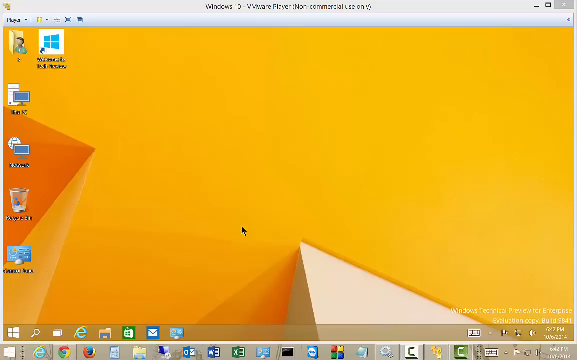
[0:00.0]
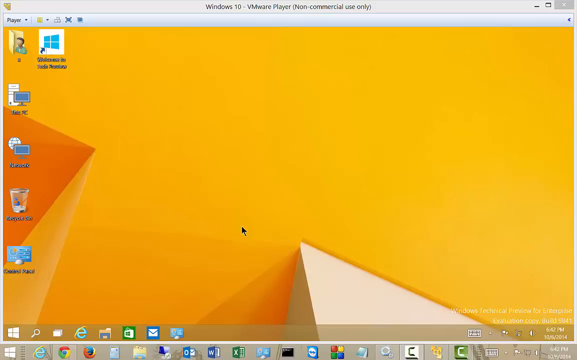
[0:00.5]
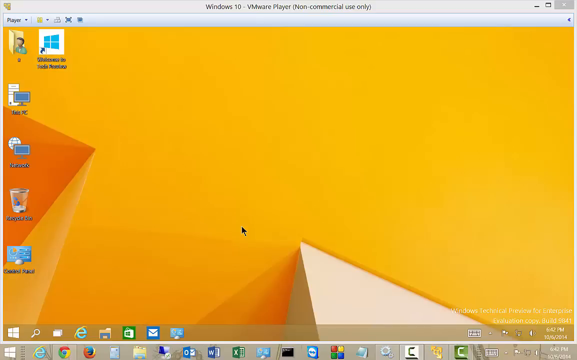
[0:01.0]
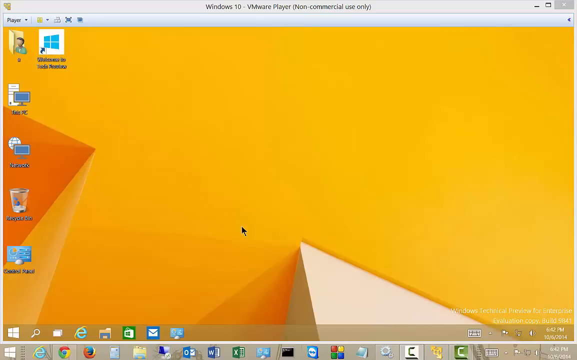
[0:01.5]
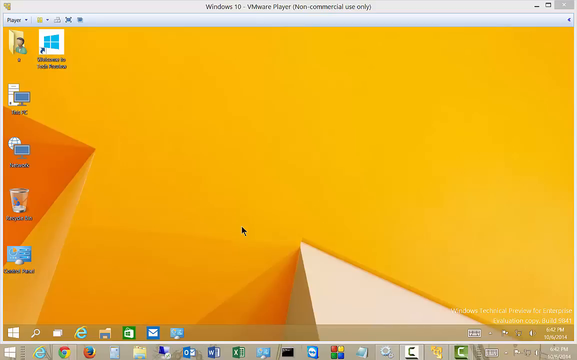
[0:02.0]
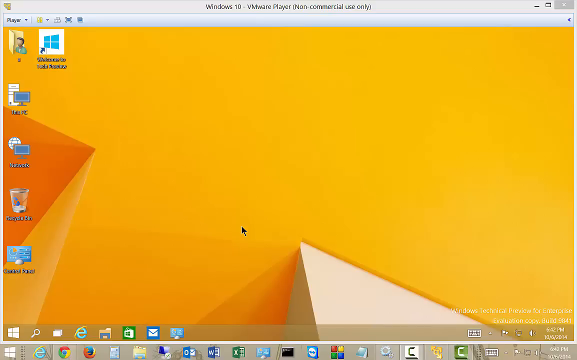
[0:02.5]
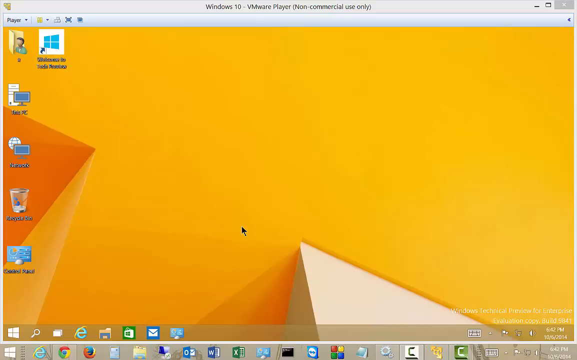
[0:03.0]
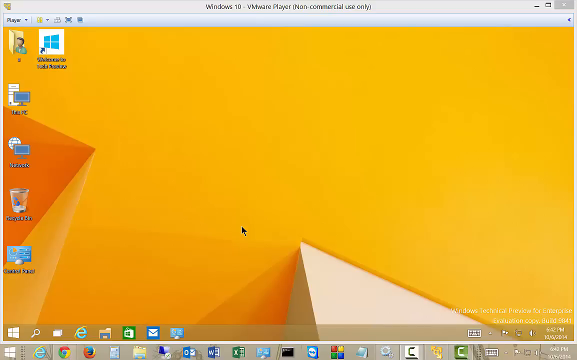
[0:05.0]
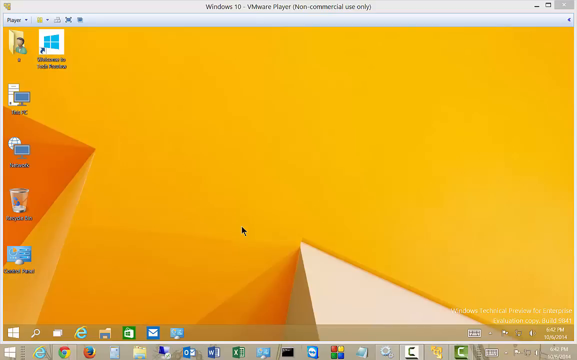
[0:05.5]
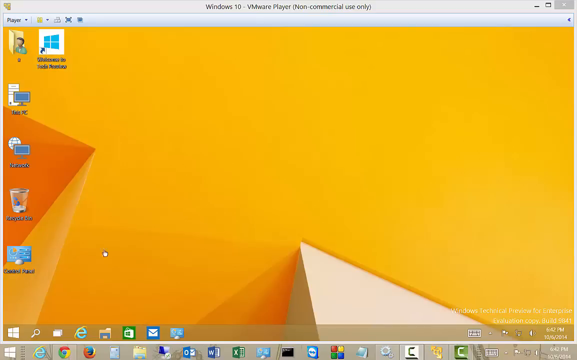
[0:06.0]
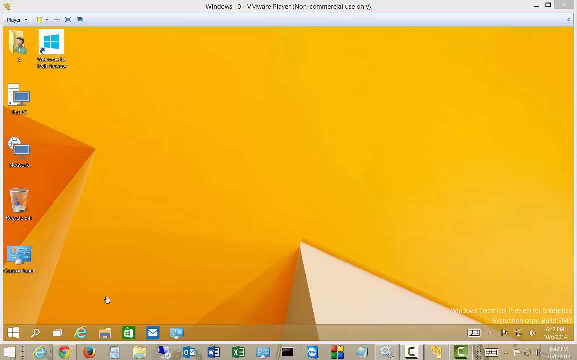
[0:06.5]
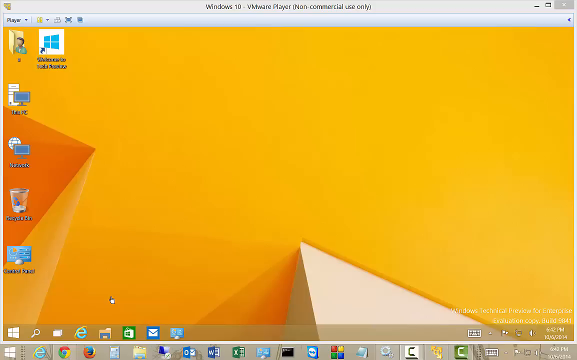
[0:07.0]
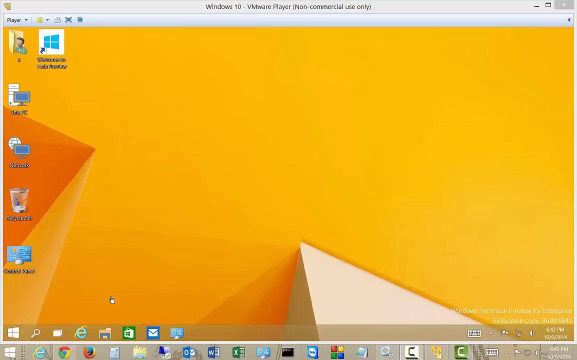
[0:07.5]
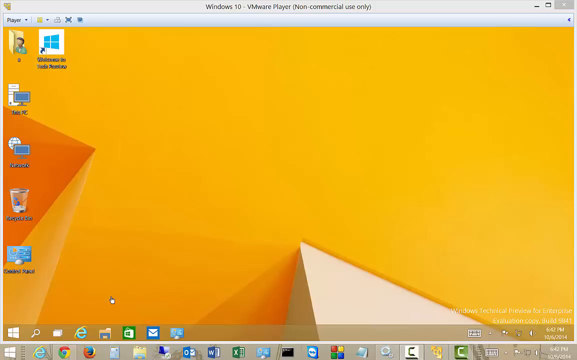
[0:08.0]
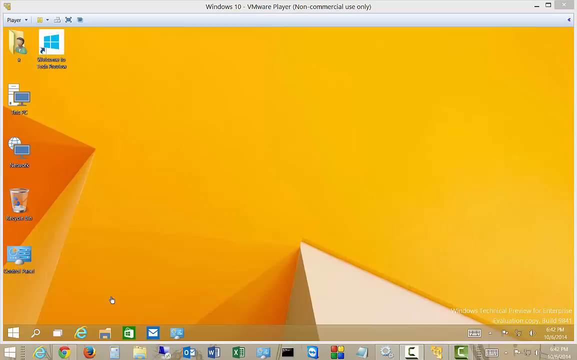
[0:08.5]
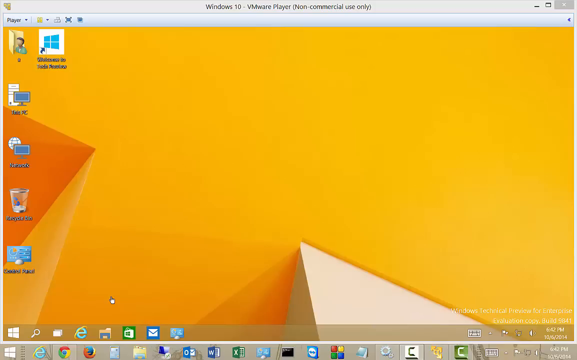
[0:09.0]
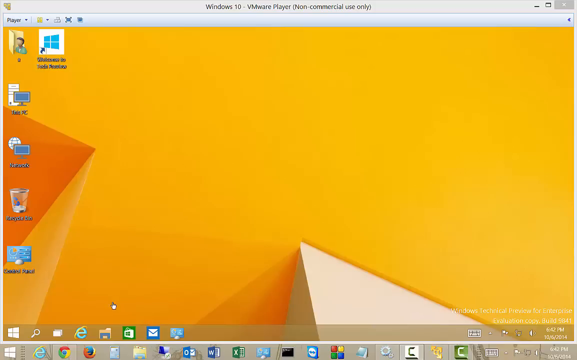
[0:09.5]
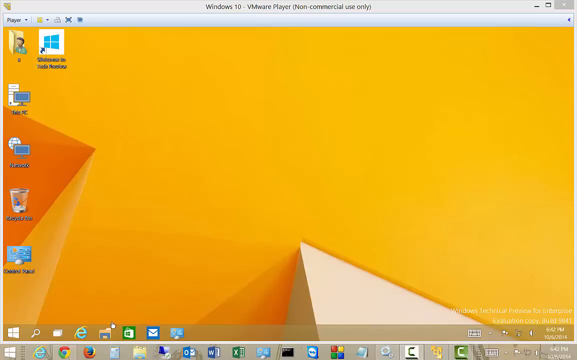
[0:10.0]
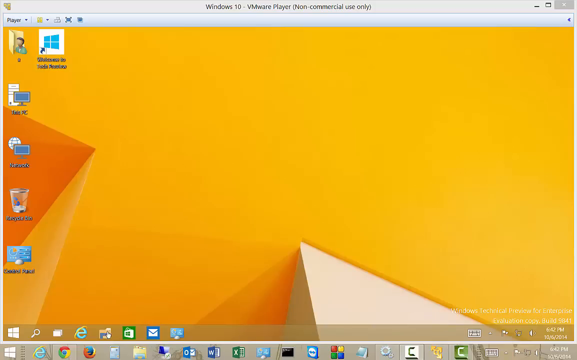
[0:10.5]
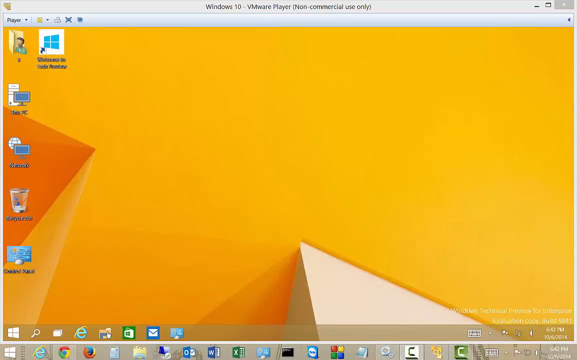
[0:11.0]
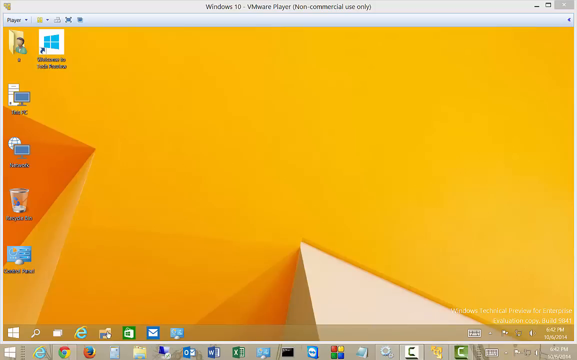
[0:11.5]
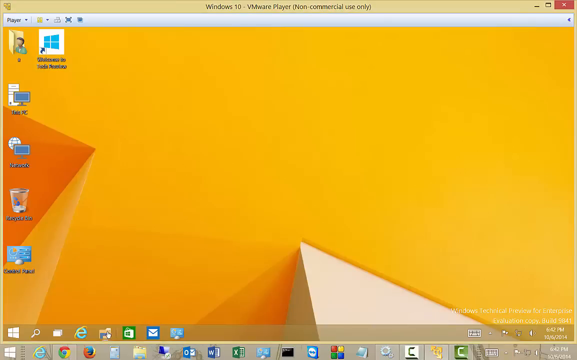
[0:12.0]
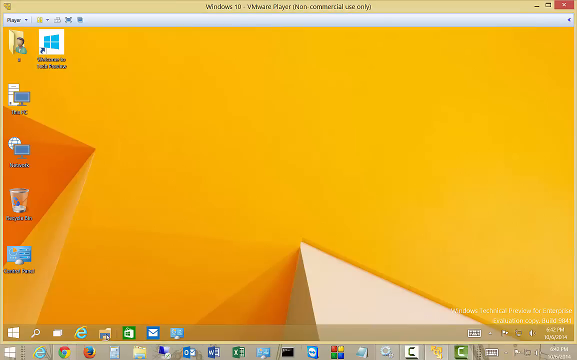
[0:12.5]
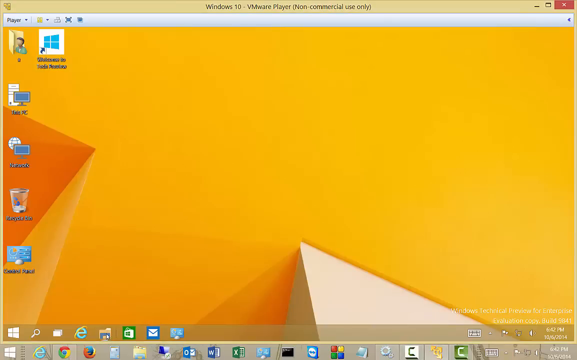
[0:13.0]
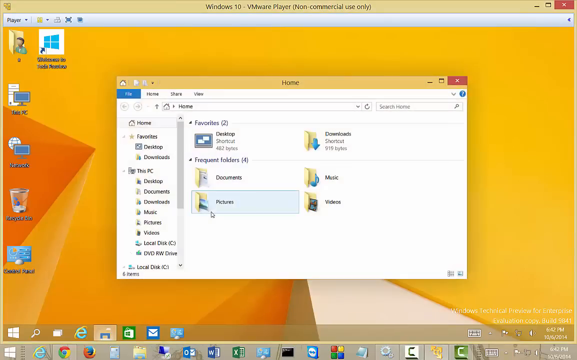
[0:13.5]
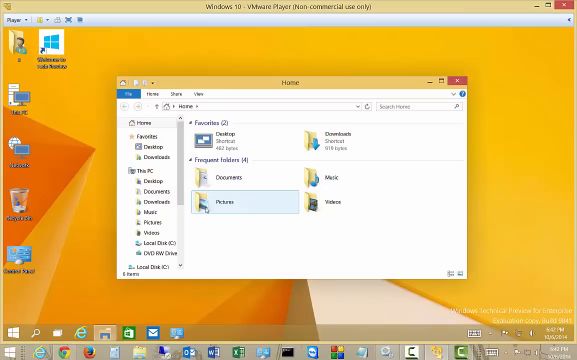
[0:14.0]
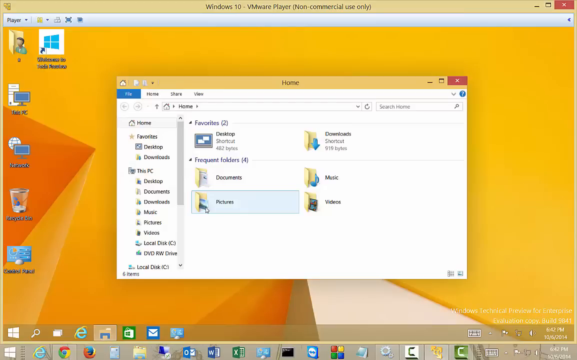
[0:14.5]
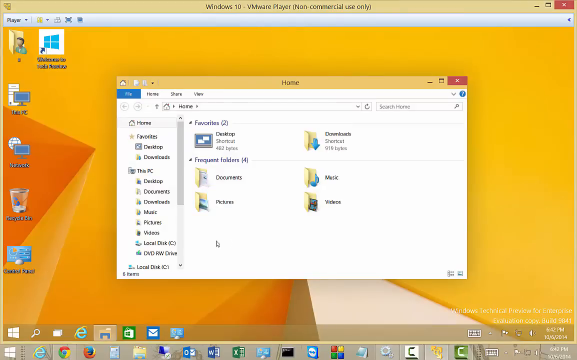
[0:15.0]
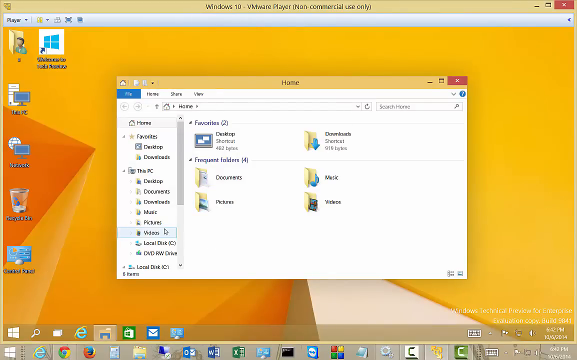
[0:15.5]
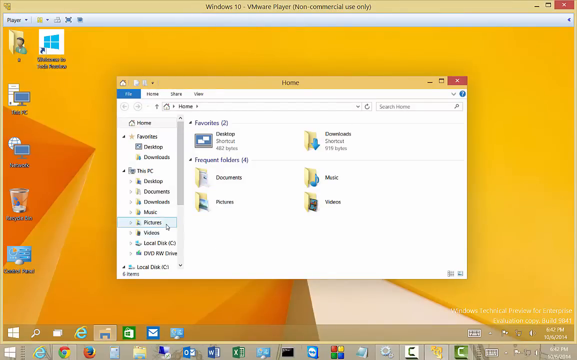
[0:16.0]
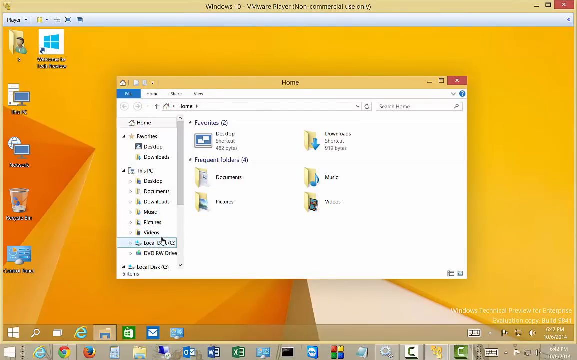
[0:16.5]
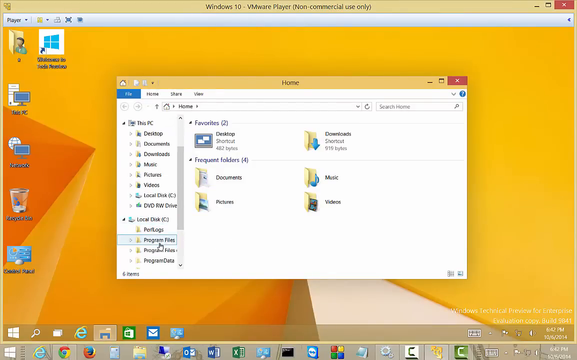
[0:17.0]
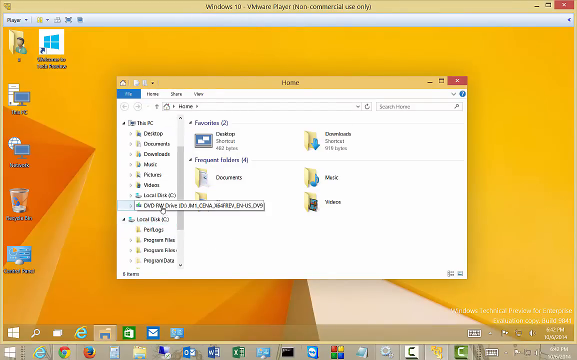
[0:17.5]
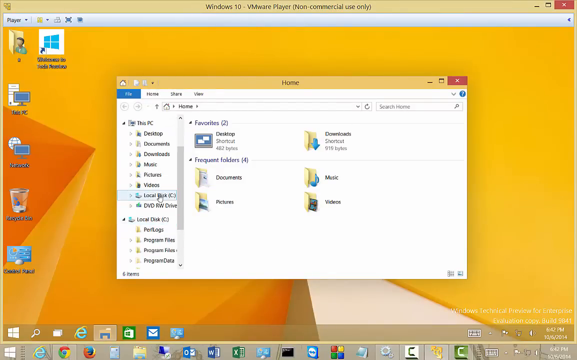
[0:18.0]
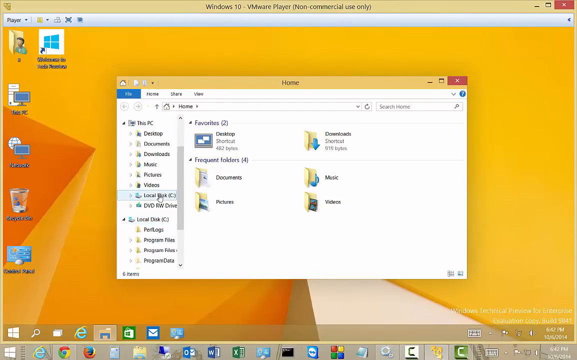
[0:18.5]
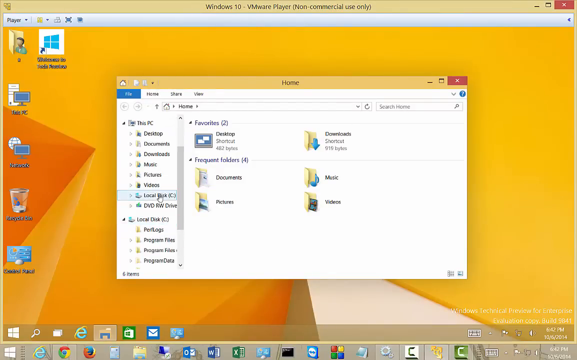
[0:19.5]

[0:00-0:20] A bright yellow background appears, apparently the desktop of a computer screen, with text on top reading "Windows 10 VMware player non-commercial use only." The background has geometric shapes that resemble pyramids seen from an angle. There are six icons, including the recycle bin, one that says "your PC" and another with the Microsoft logo. At the bottom are many logos and apps, then the time and the volume. The pointer goes to My Files, hovers around Pictures for a little bit, then moves to the left panel and hovers around Local Disk. It scrolls down a little, goes back to Local Disk and right-clicks on it.